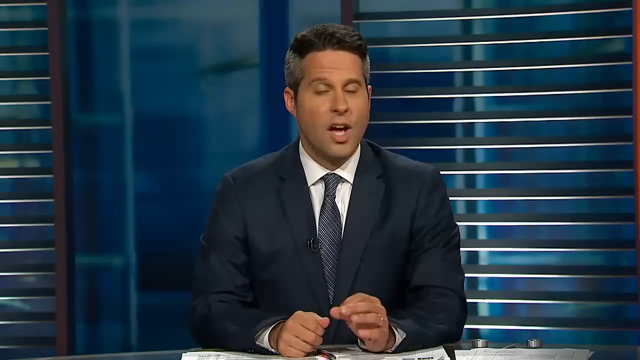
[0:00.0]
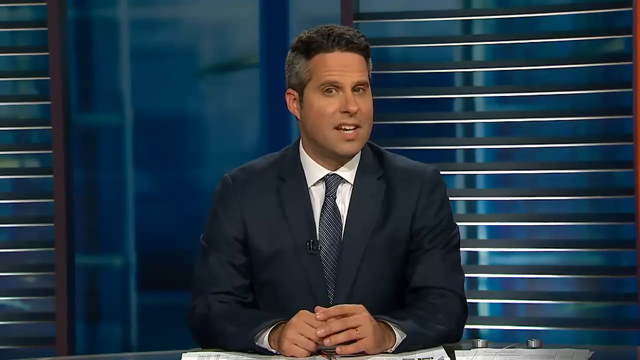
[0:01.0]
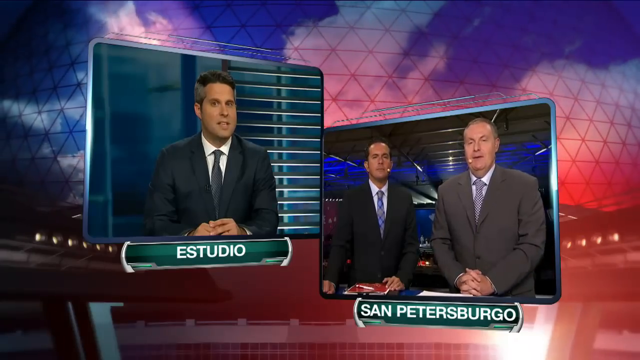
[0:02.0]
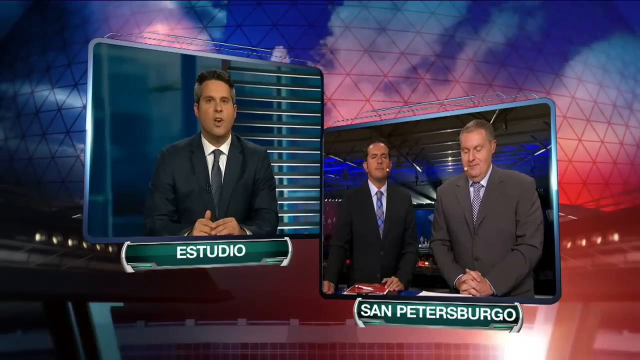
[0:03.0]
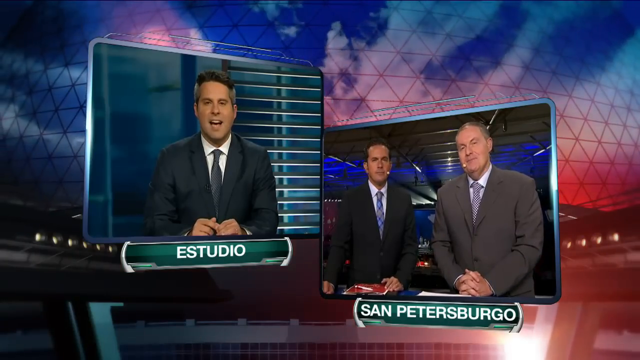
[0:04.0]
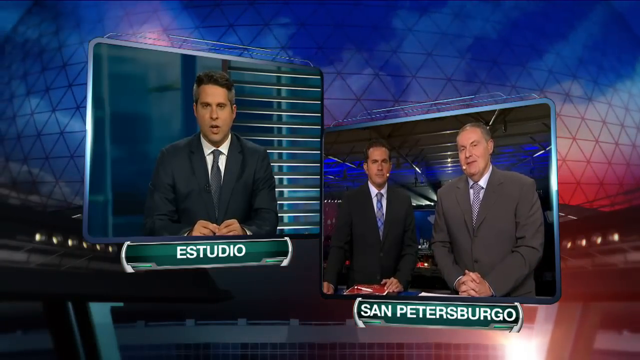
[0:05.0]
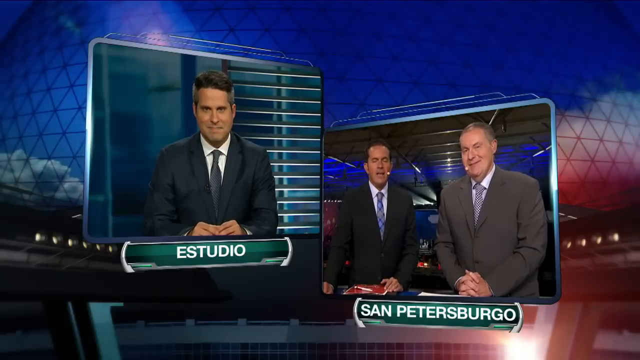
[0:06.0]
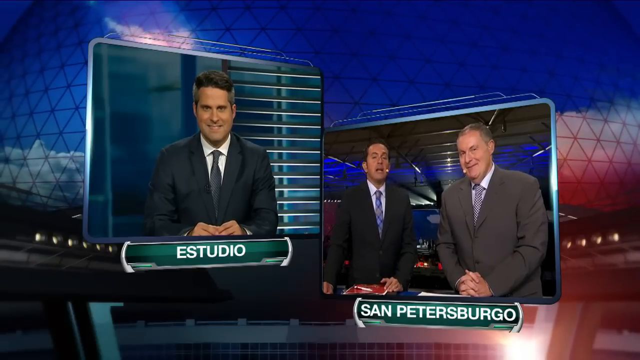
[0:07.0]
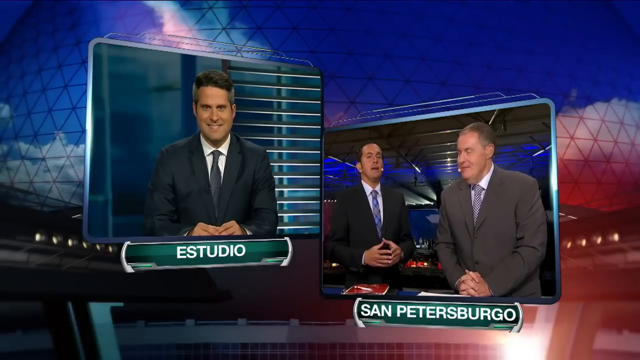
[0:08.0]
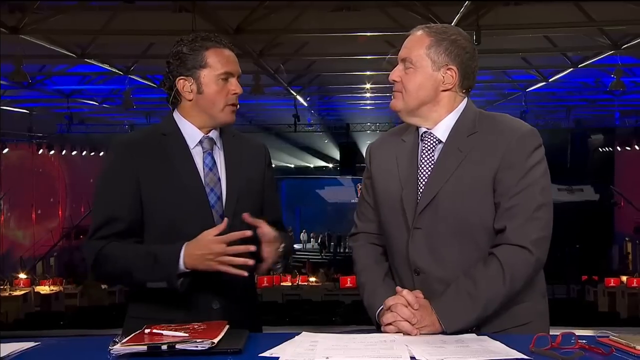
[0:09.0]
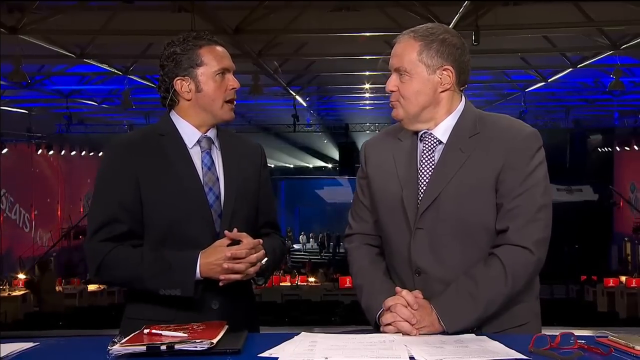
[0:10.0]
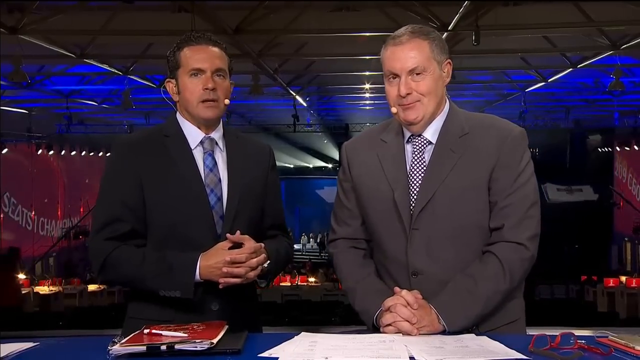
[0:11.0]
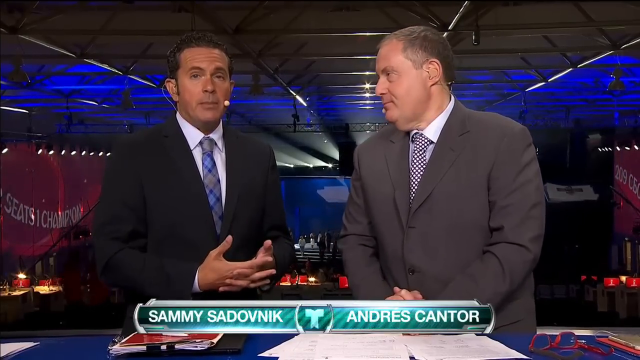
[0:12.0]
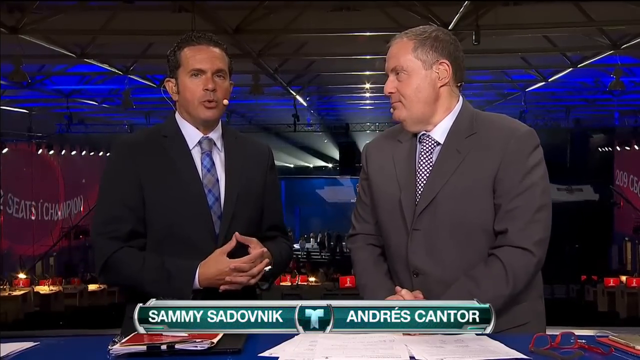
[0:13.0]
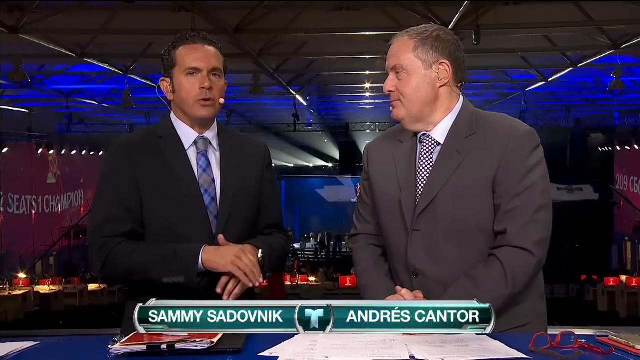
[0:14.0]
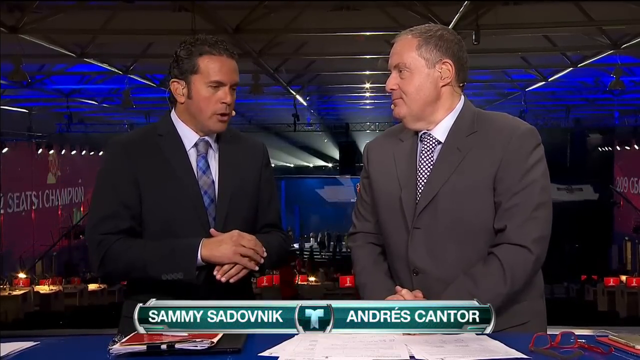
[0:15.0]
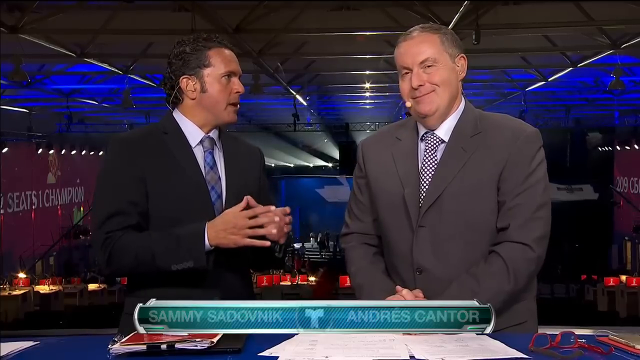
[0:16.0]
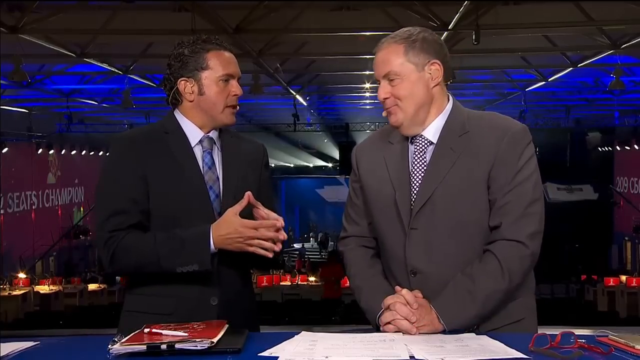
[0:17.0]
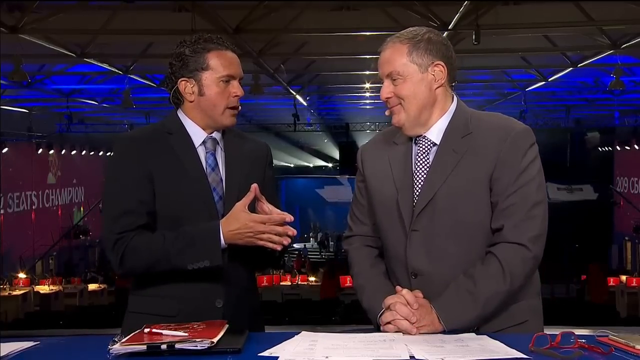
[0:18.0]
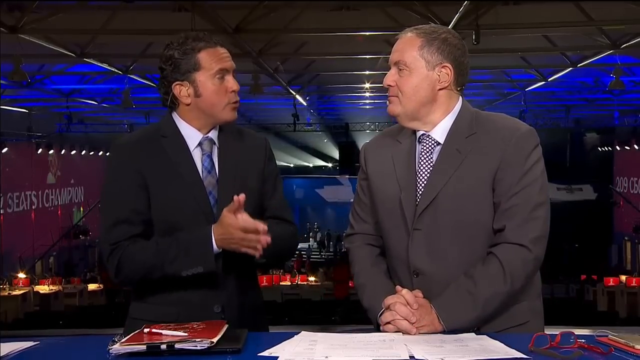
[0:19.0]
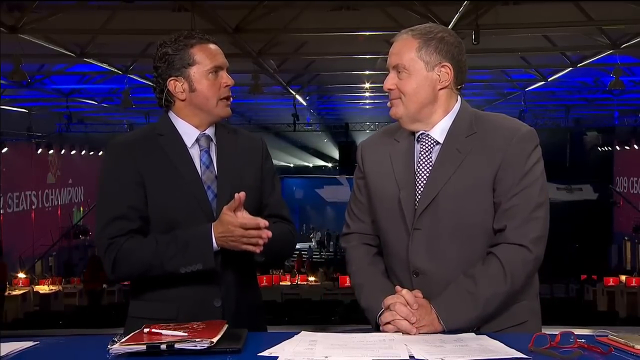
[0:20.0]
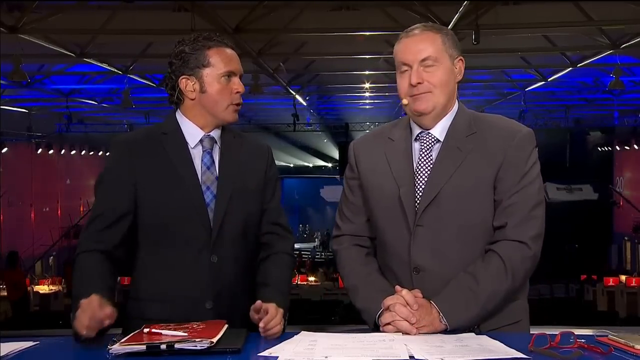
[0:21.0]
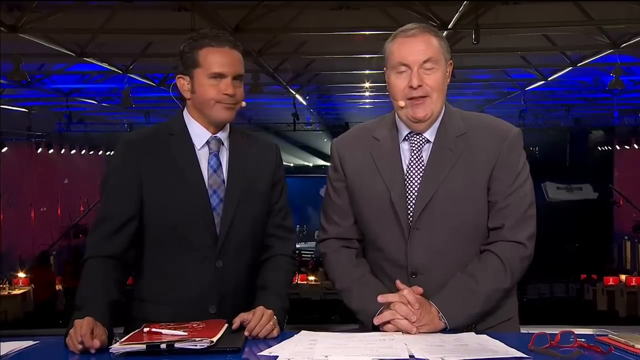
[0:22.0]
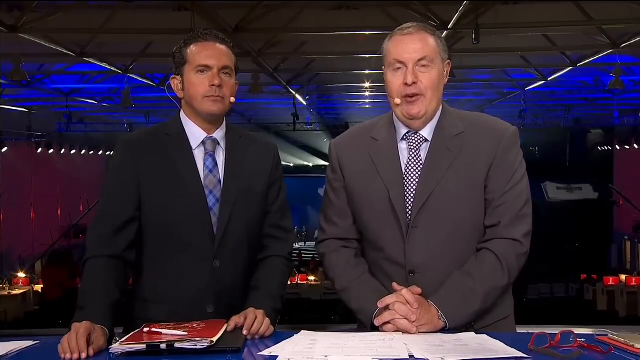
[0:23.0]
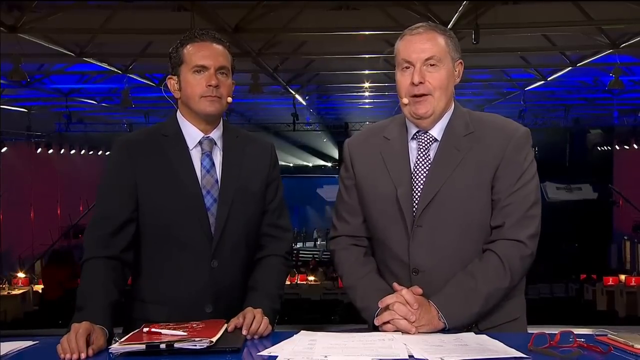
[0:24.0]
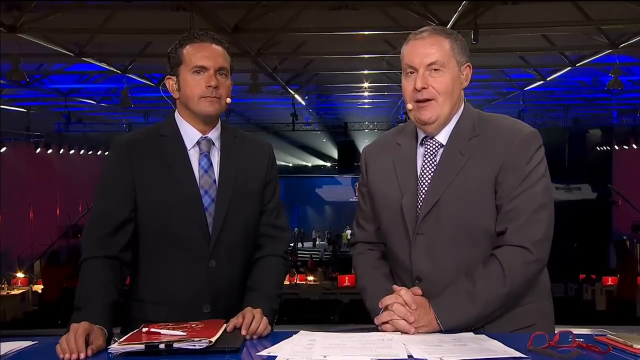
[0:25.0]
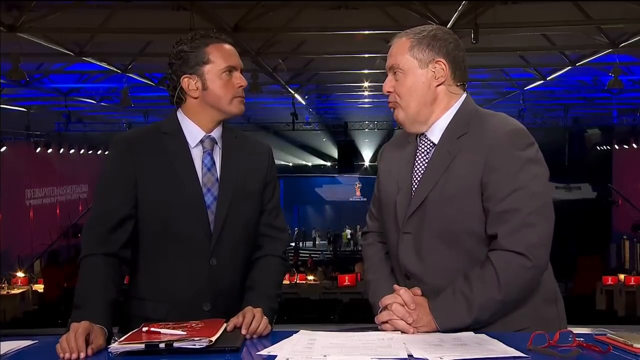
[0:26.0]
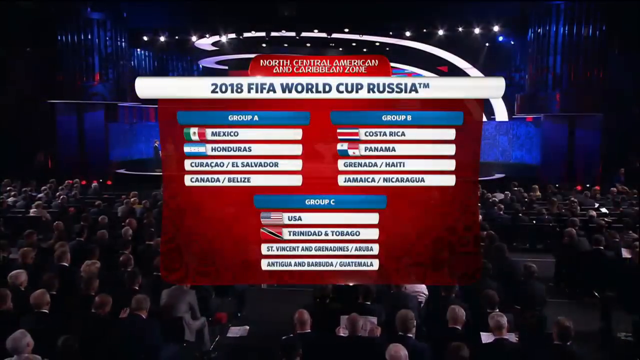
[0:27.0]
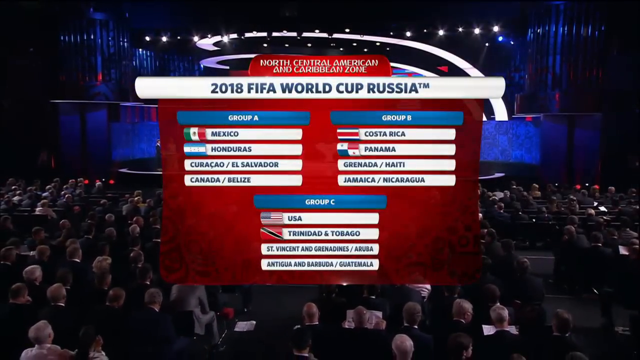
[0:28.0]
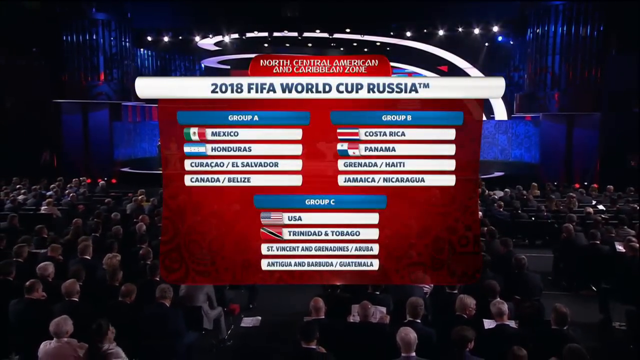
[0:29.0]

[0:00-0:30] A white Caucasian man appears in a news broadcasting setting. The screen then splits: the same man is on the left side, while the right side shows two men side by side, also in a news broadcasting type of setting. Underneath the man on the left it says "a studio", and underneath the men on the right it says "San Petersburgo". The view then changes to the right-side screen, where both men are next to each other, and their names appear: "Sammy Sadopnik" on the left and "Andres Cantor" on the right. Both men are shown speaking. Finally, text appears reading "North Central American and Caribbean zone, 2018 FIFA World Cup, Russia. Group A, Mexico, Honduras, Curacao / El Salvador, Canada / Belize. Group B, Costa Rica, Panama, Granada / Haiti, Jamaica / Nicaragua. Group C, USA, Trinidad and Tobago, St. Vincent and Grenadines / Aruba, Antigua and Barbuda / Guatemala."